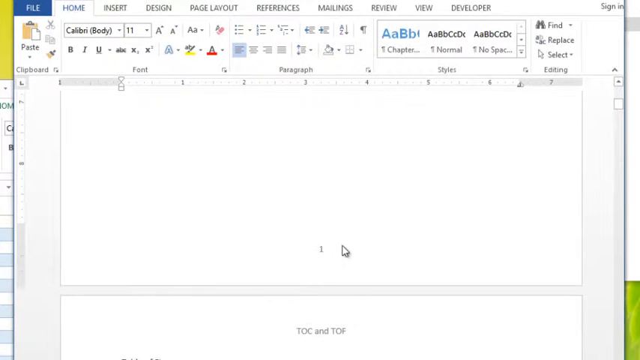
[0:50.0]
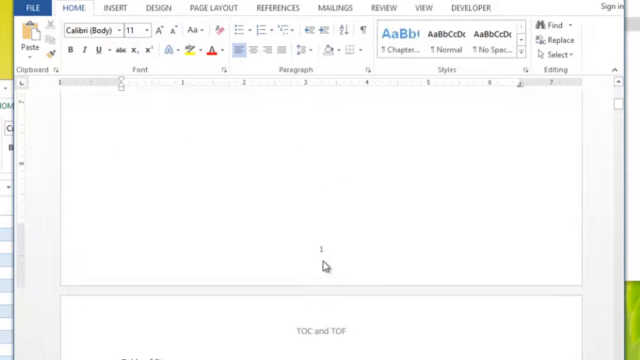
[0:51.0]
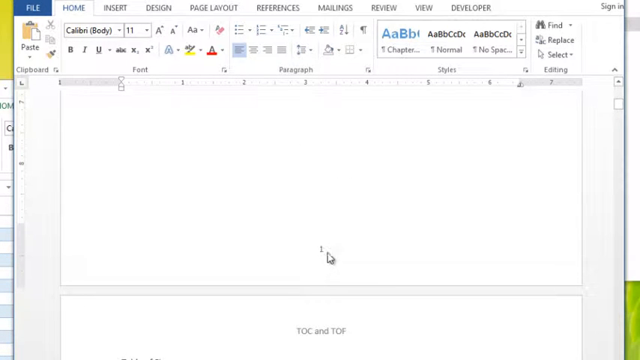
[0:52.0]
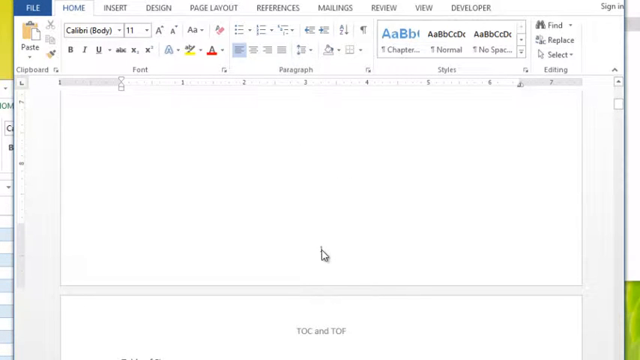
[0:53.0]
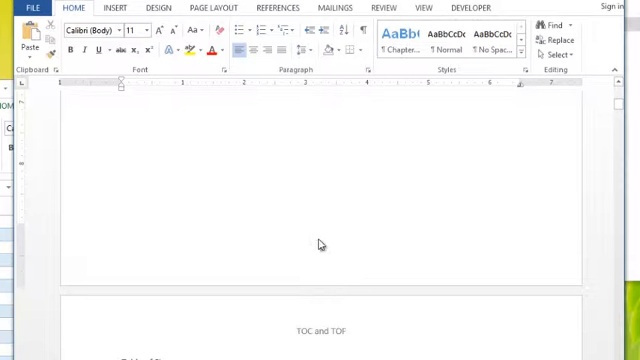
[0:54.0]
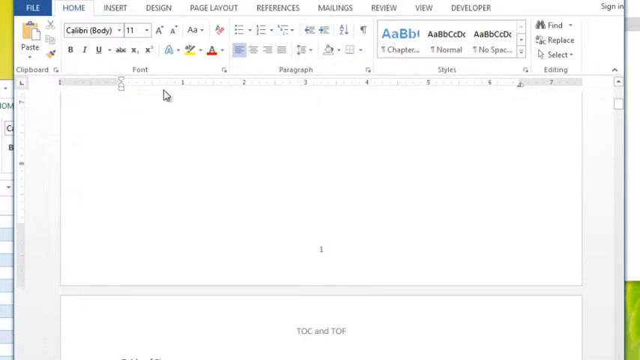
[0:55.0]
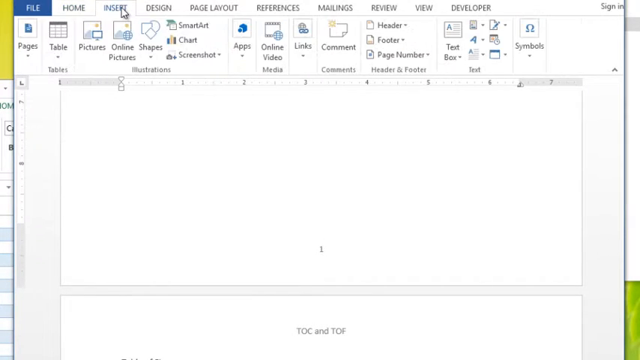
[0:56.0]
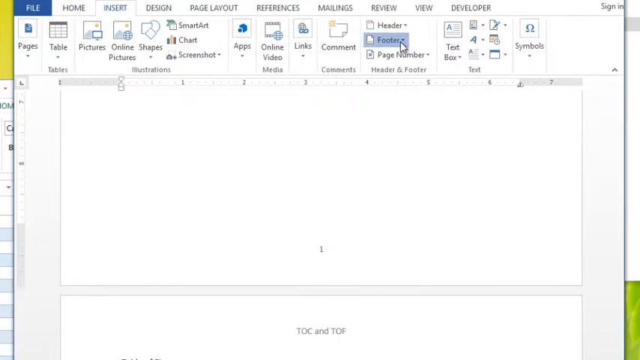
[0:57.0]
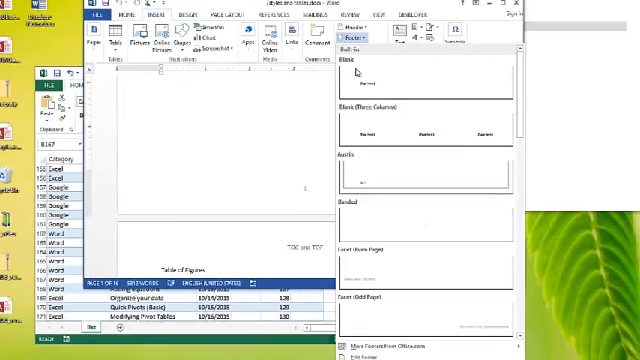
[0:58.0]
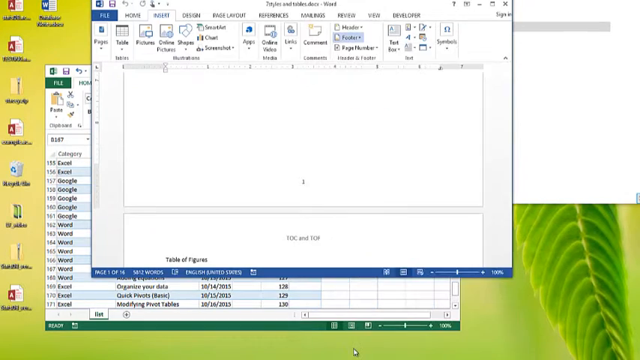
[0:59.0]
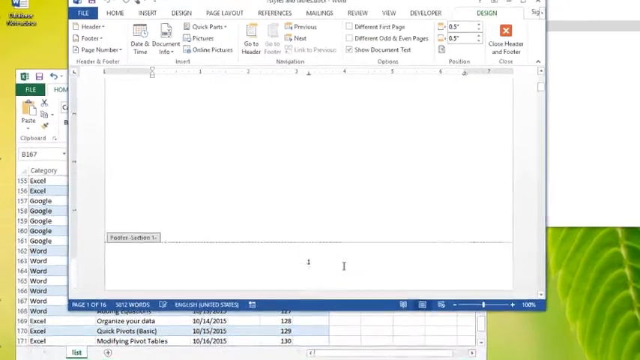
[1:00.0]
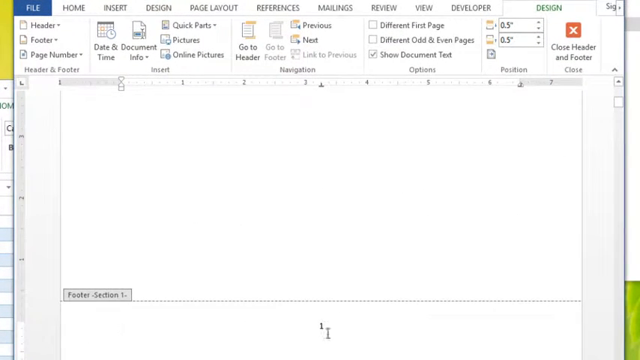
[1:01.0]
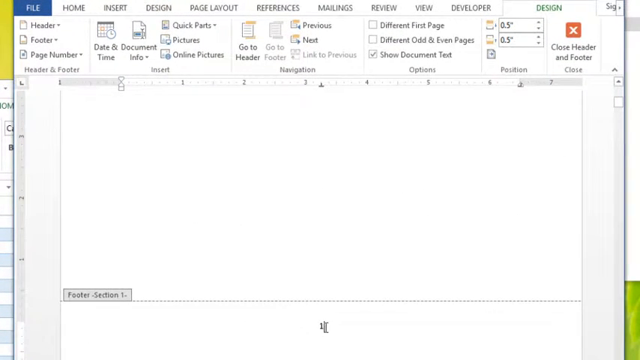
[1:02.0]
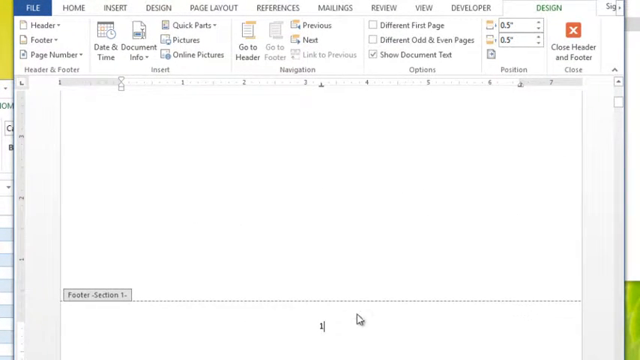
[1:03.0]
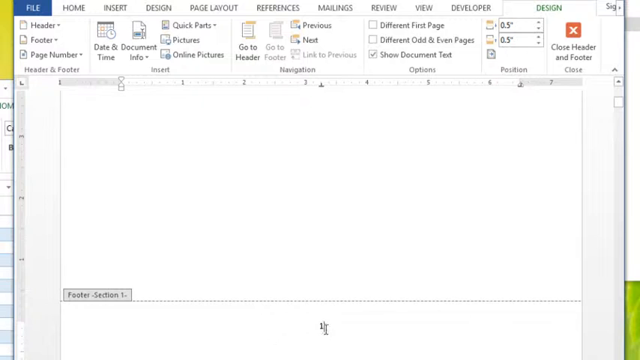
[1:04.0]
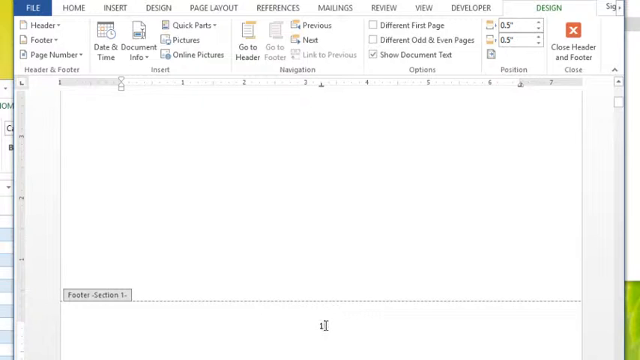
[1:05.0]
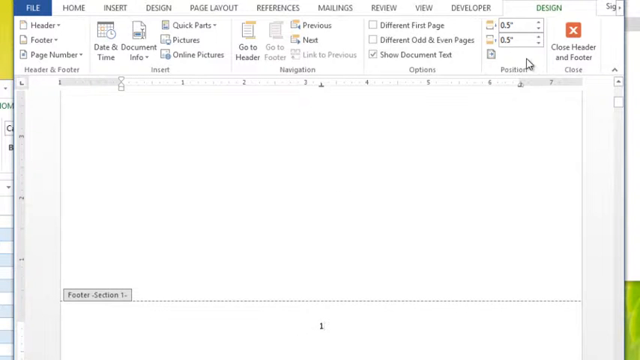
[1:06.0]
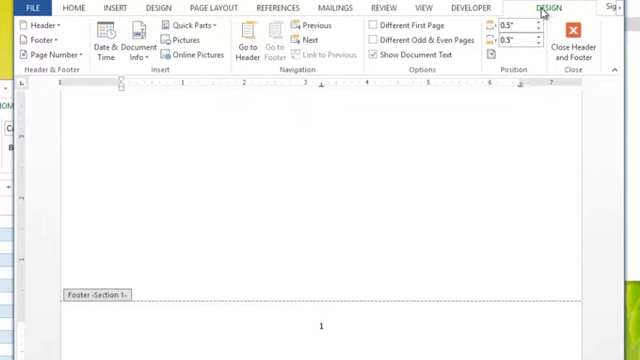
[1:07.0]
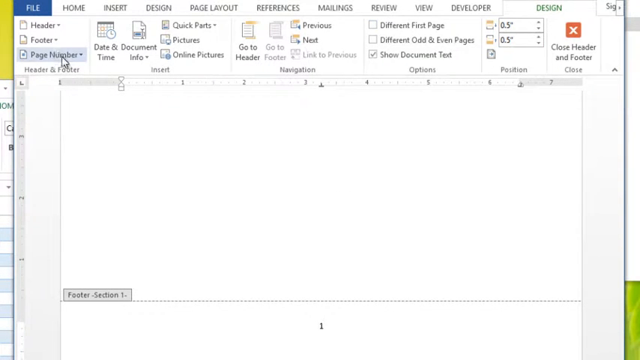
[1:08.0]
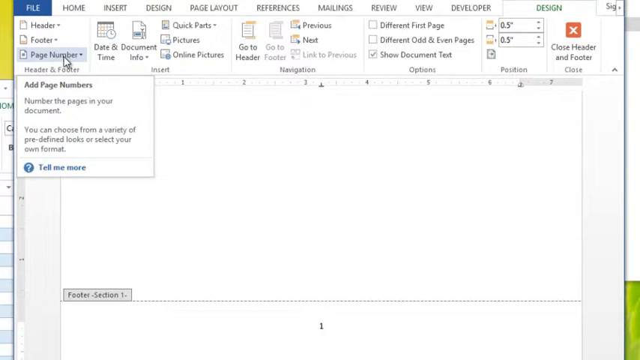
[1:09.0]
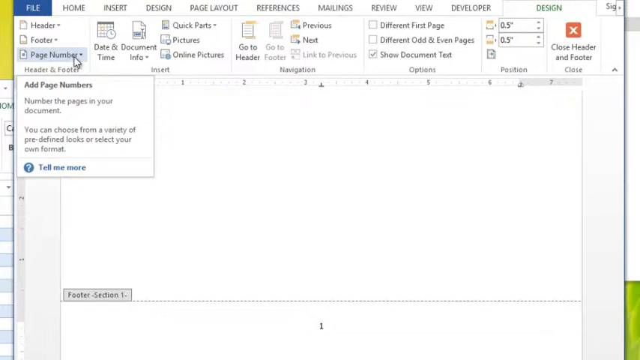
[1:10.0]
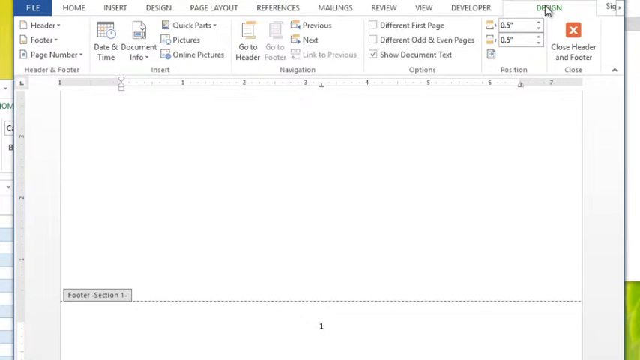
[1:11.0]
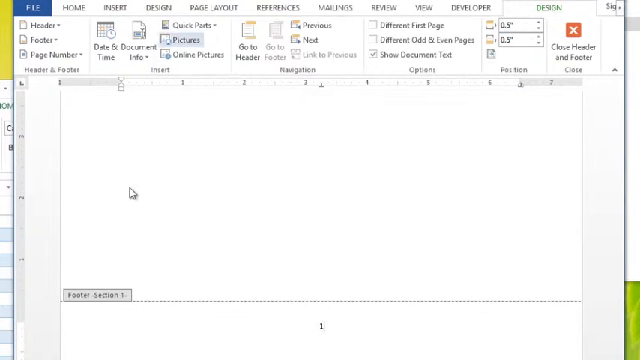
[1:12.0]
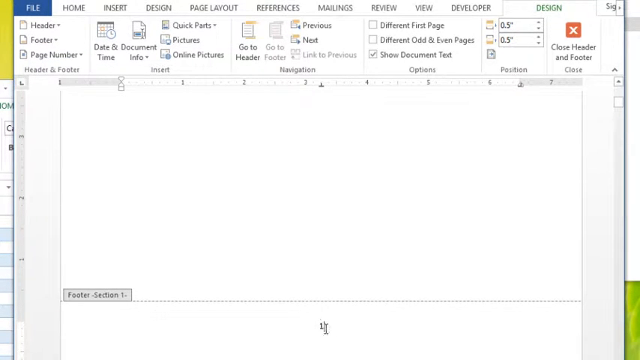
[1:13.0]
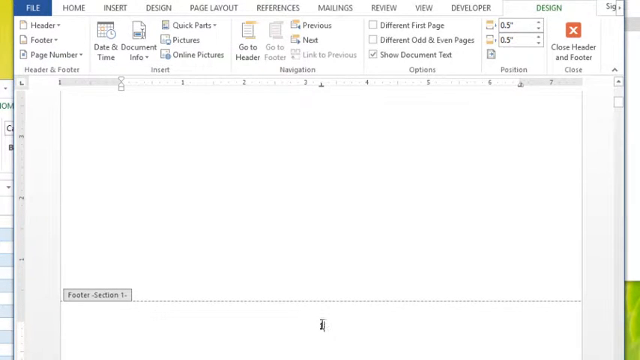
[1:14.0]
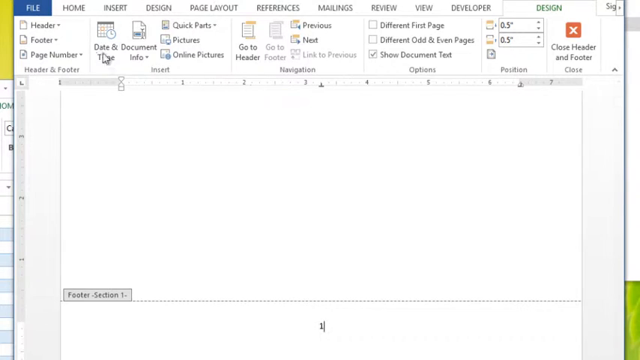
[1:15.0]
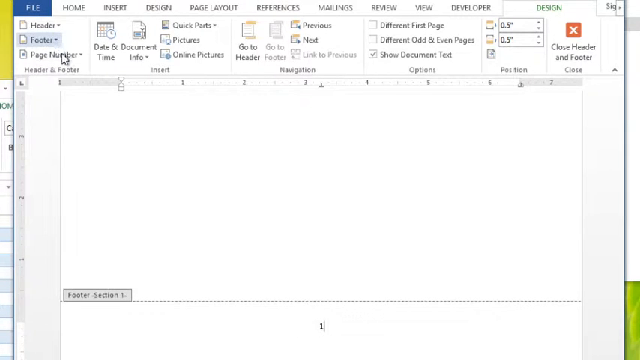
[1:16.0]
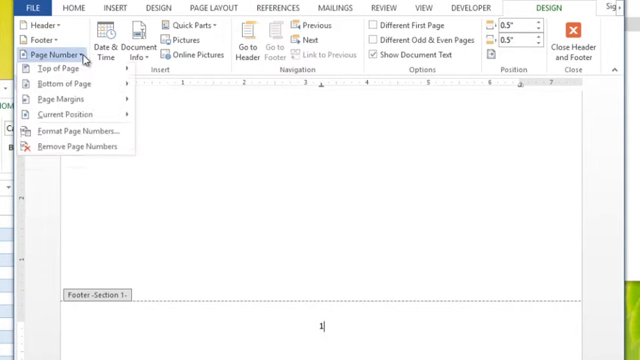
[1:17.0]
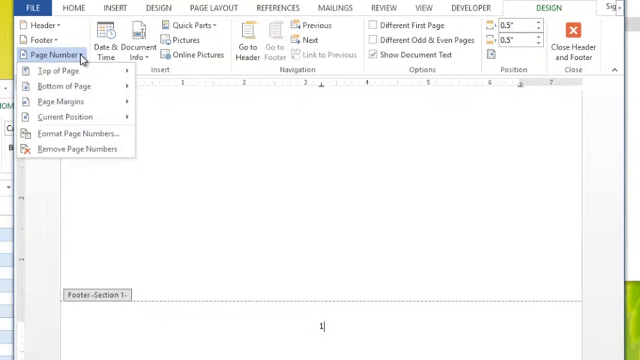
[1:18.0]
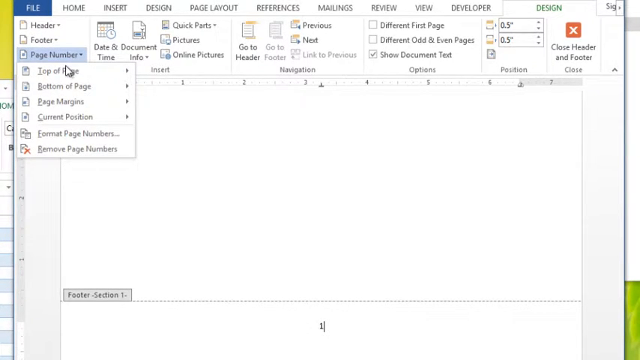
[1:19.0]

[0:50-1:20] The person goes into Insert at the top left-hand corner of Word and then into the footer. They apparently also go into design, adjusting the number's appearance and its position on the page. Page number and formatting options are also opened, and the demonstration apparently stops there.